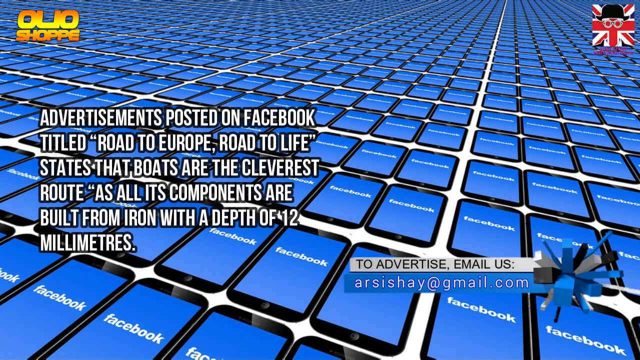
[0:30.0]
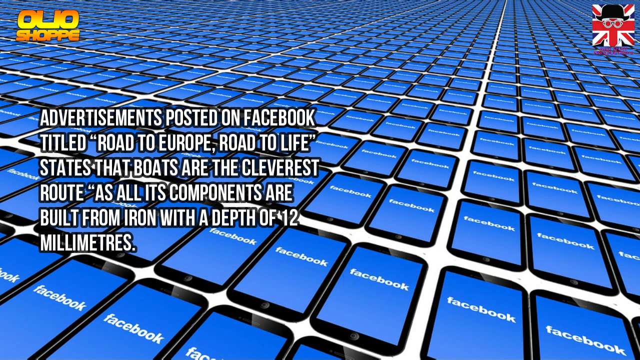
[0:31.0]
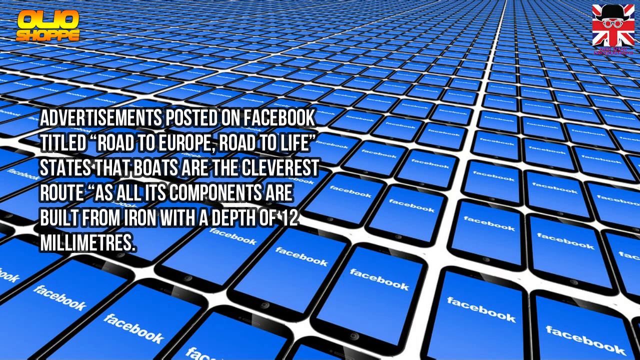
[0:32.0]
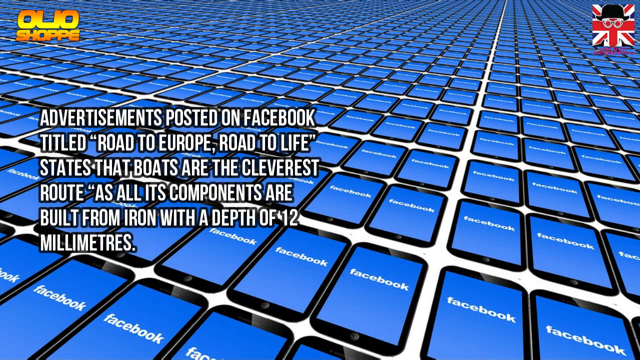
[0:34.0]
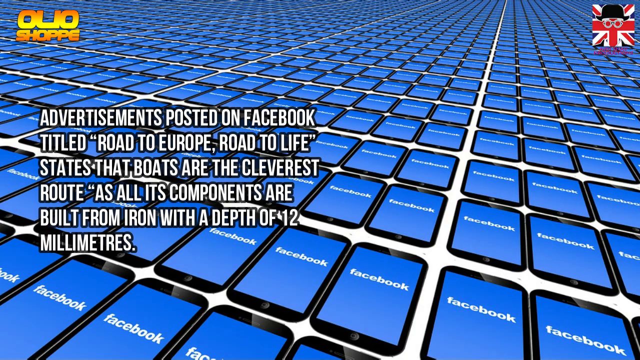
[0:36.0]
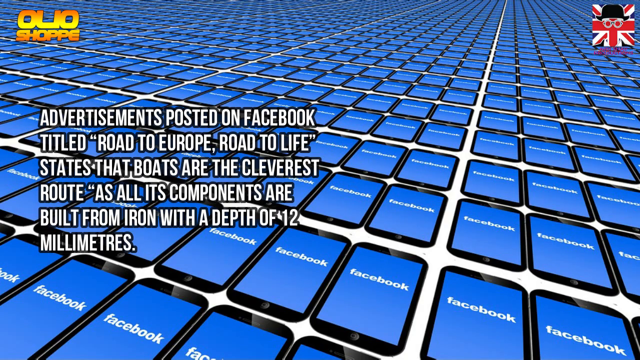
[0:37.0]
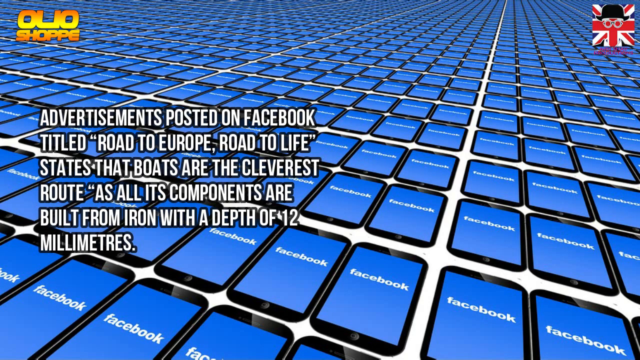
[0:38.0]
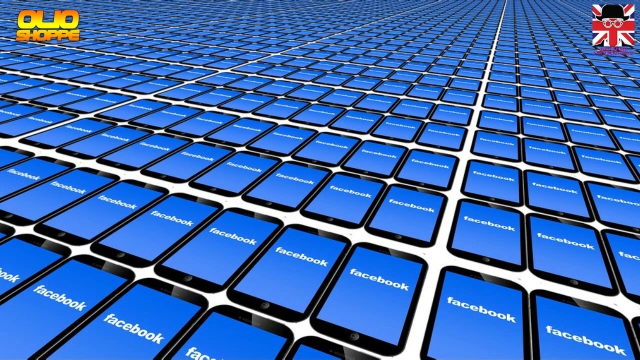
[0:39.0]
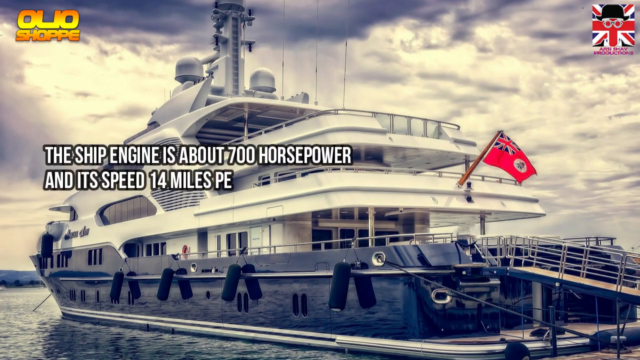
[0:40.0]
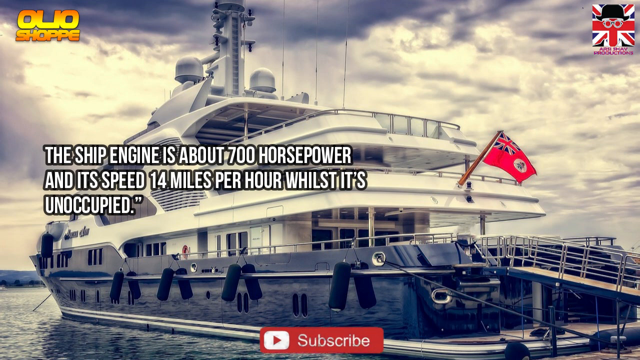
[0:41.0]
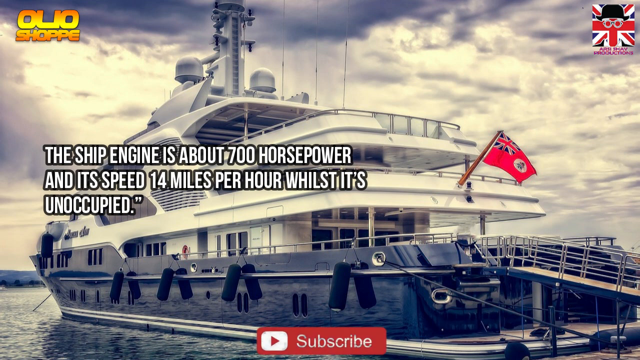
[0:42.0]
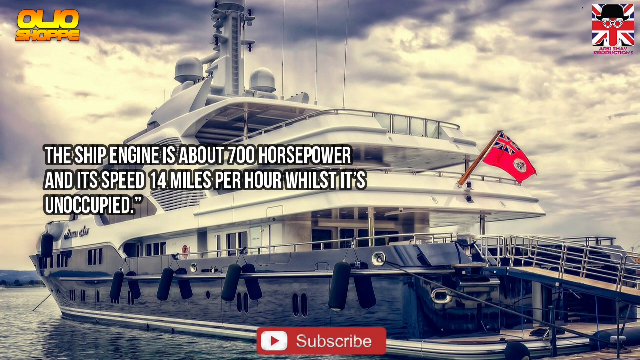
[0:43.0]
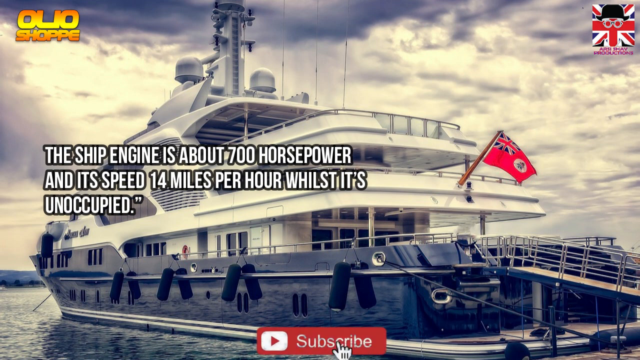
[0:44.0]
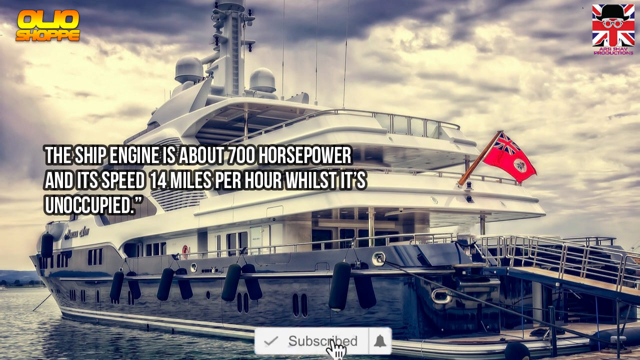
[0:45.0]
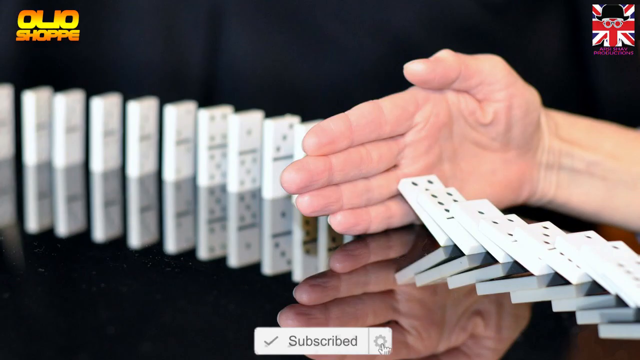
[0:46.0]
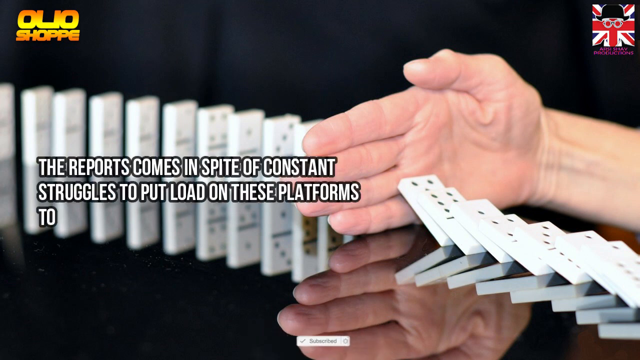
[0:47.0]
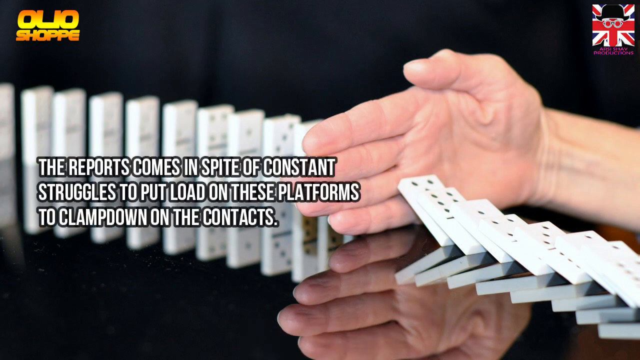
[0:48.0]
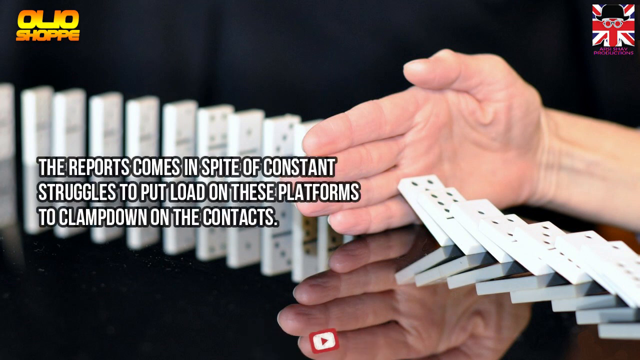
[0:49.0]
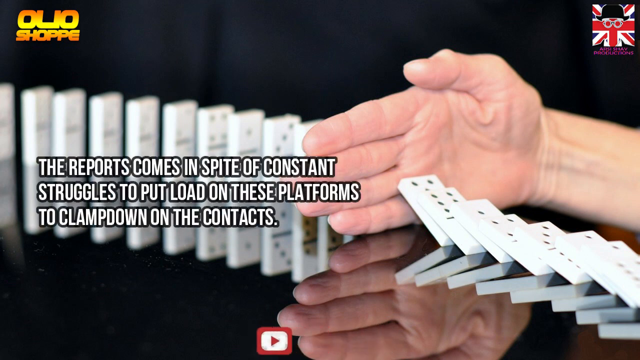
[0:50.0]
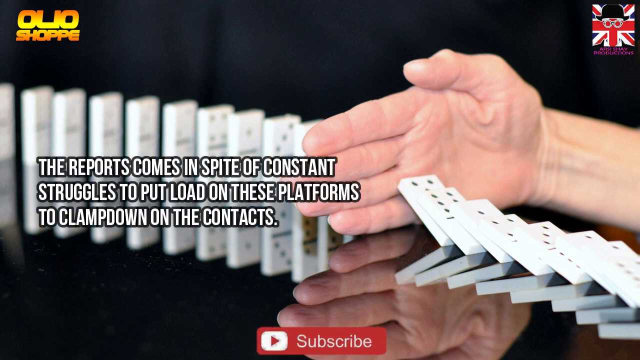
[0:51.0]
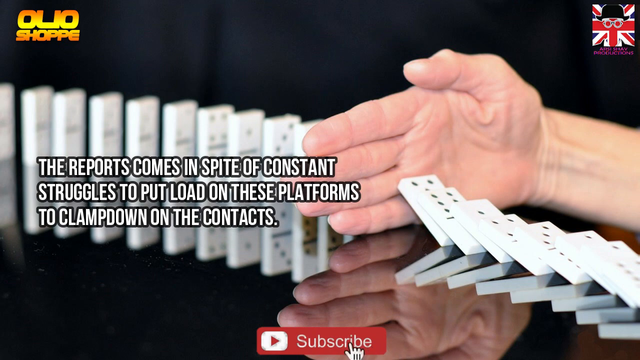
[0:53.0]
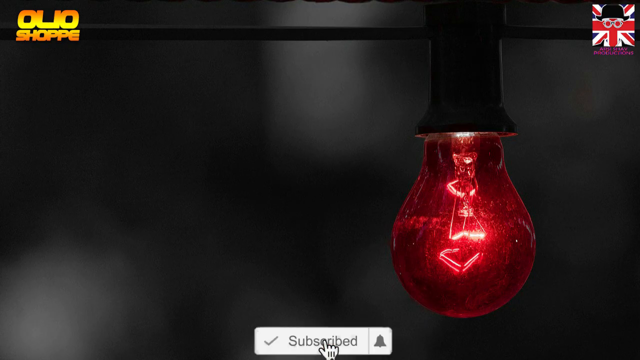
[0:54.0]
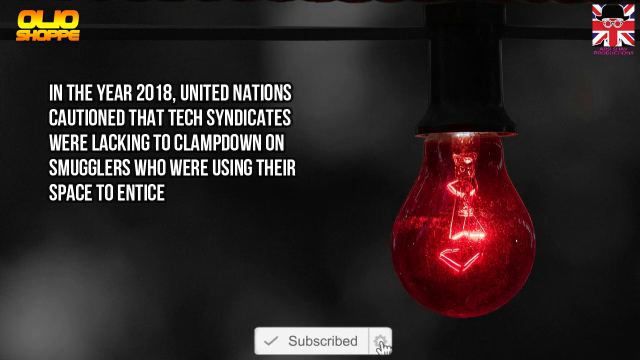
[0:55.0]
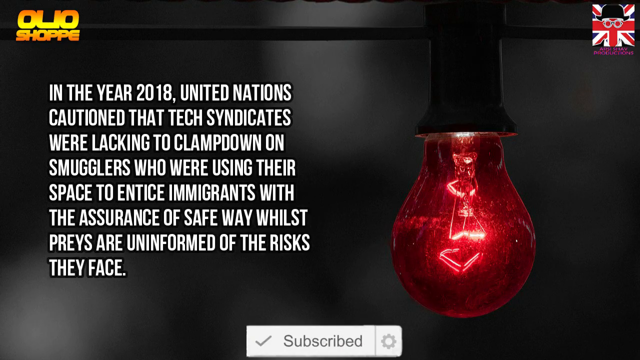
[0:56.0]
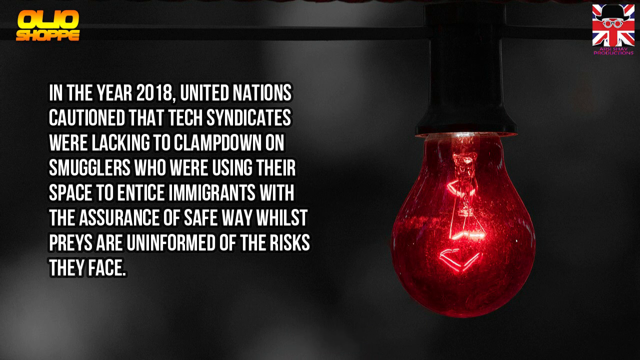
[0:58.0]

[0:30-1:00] The blue Facebook phones remain on screen, showing "Facebook" in white text. A big yacht appears, with white text reading "the ship engine is about 700 horsepower and at speed 14 miles per hour whilst it's unoccupied." The yacht has a red flag on the front. Next, dominoes fall and a Caucasian hand stops them from continuing to fall, while white text reads "the reports comes in spite of constant struggles." All of this white text is outlined in black on a black background. Then a single red light bulb hangs from the ceiling, and text on the left reads "in the year 2018 United Nations caution that tech syndicates were lacking to clamp down on smugglers who were using their space to entice immigrants with the assurance of safe way." Two icons seem to stay on screen: a logo in the upper left reading "oleo shop" in yellow and orange, and a square British flag on the right.